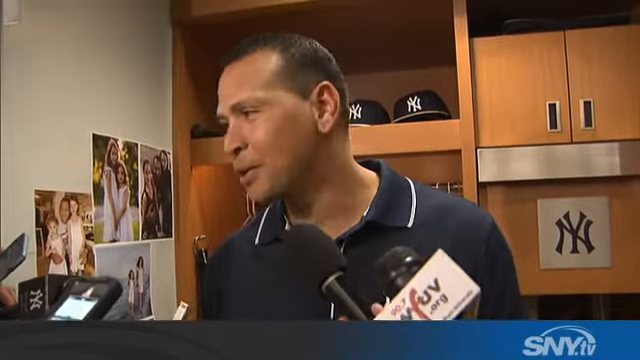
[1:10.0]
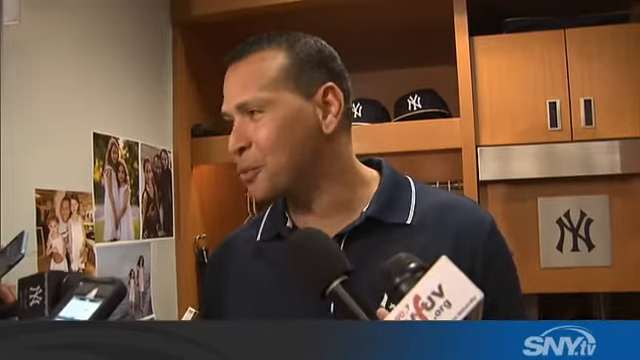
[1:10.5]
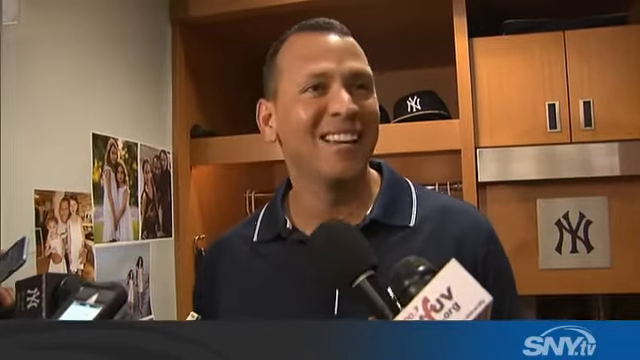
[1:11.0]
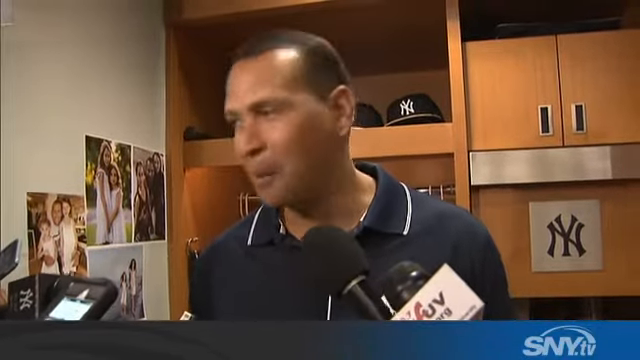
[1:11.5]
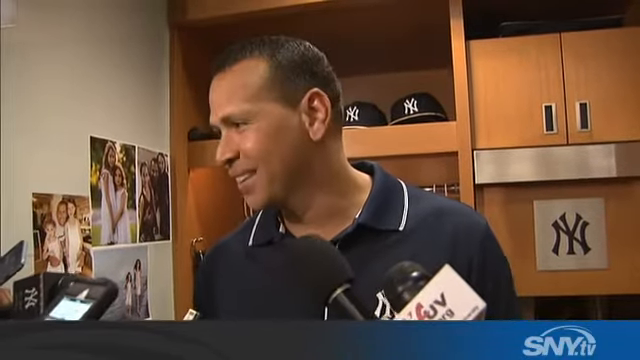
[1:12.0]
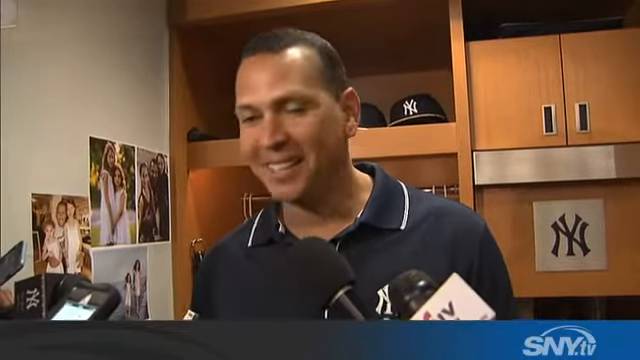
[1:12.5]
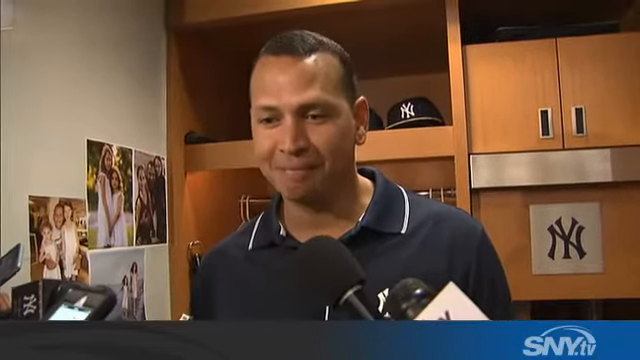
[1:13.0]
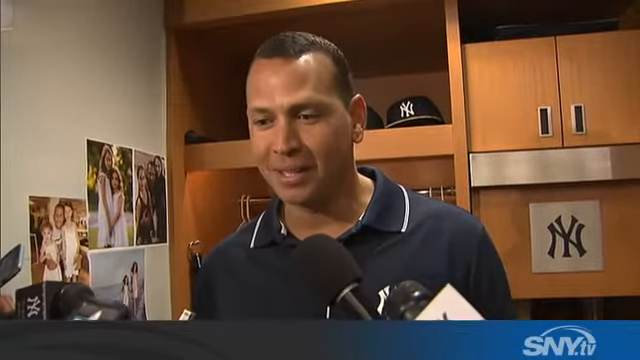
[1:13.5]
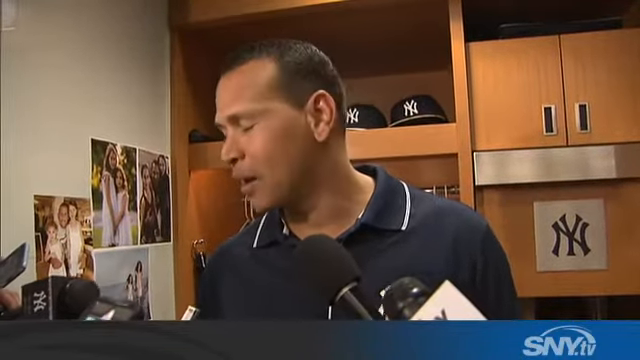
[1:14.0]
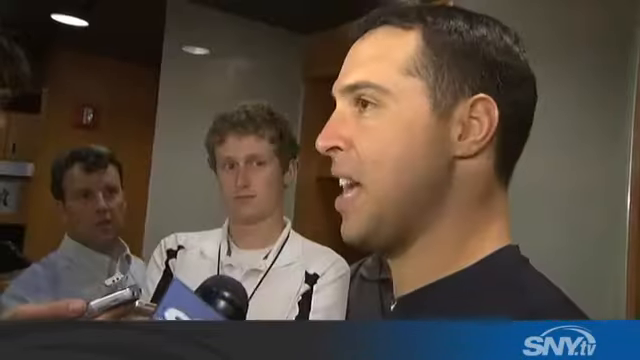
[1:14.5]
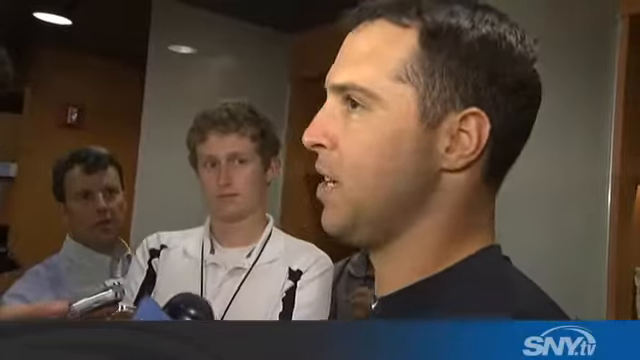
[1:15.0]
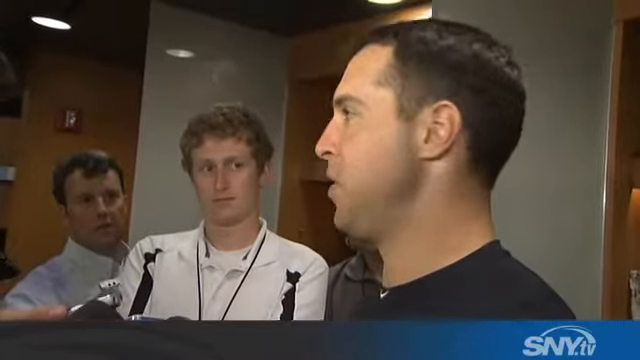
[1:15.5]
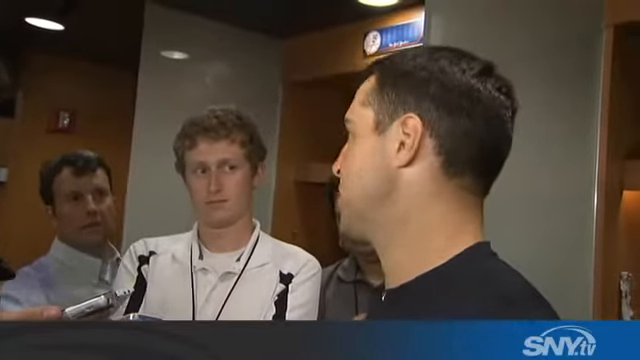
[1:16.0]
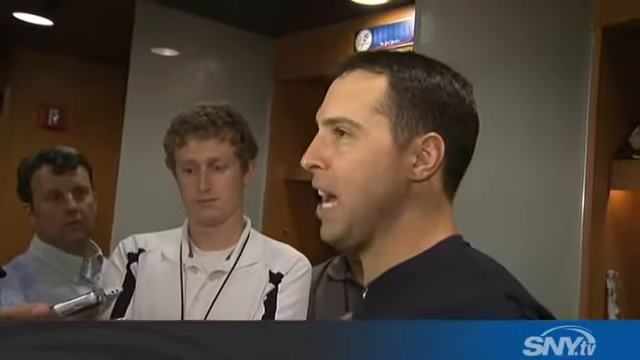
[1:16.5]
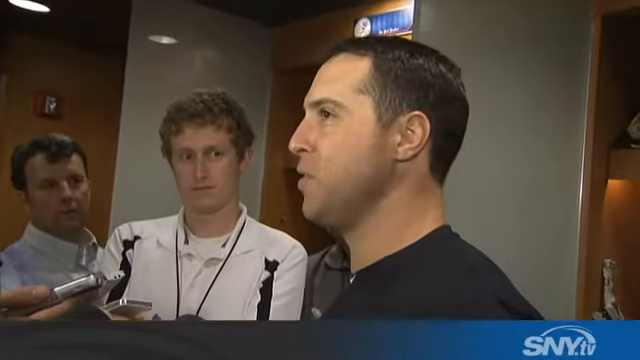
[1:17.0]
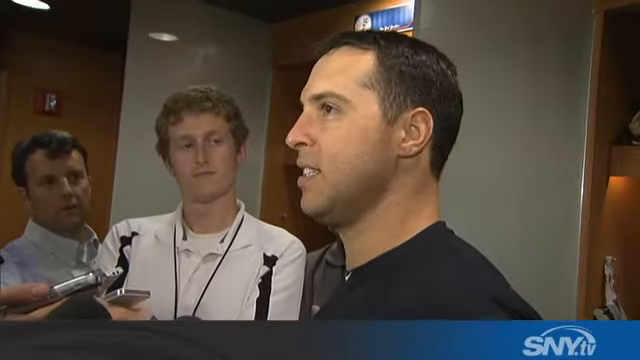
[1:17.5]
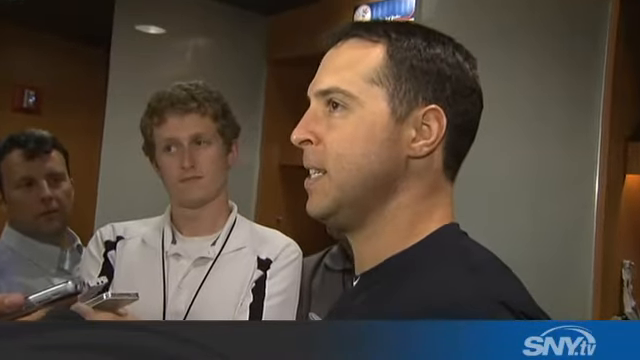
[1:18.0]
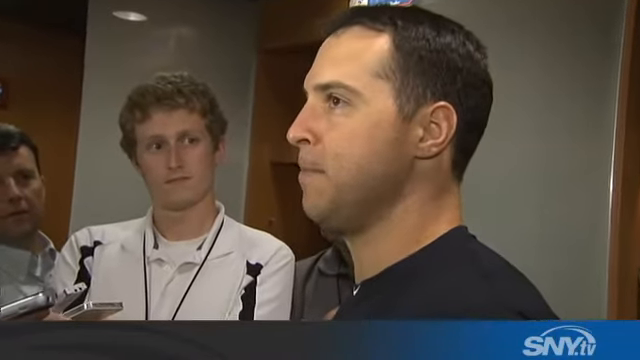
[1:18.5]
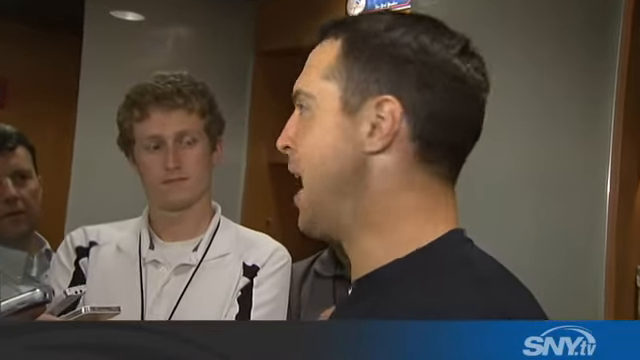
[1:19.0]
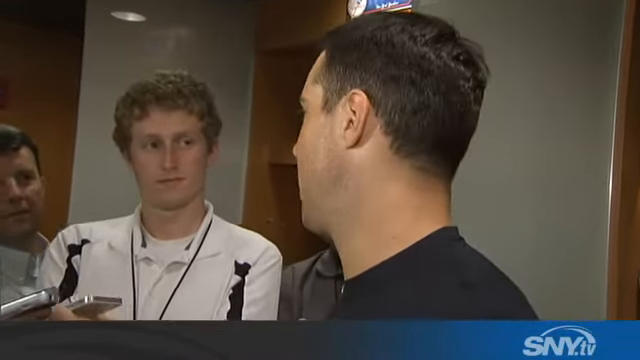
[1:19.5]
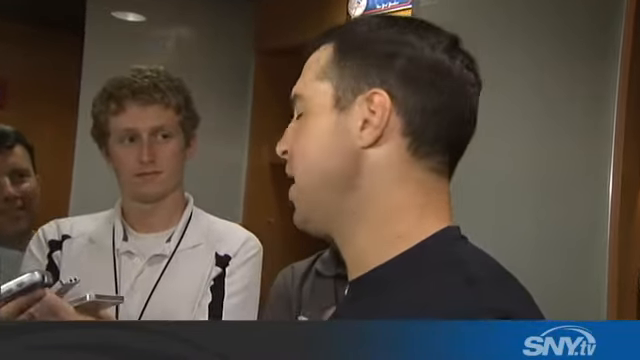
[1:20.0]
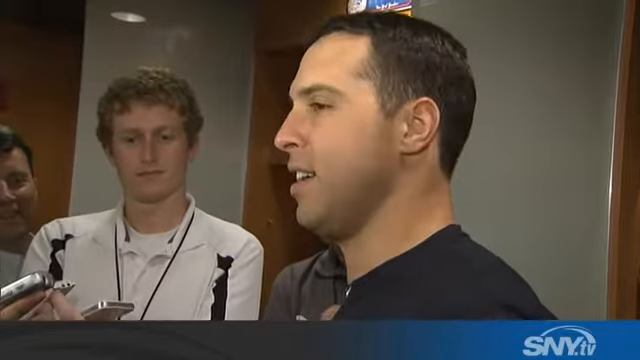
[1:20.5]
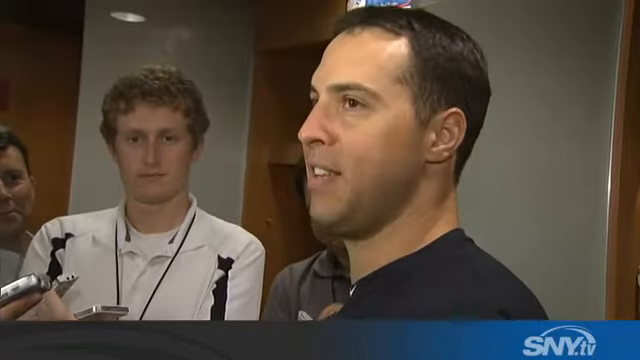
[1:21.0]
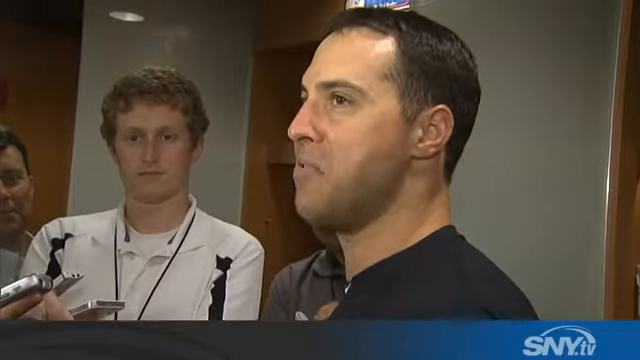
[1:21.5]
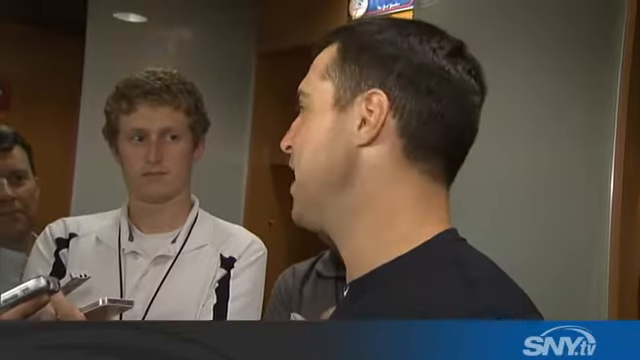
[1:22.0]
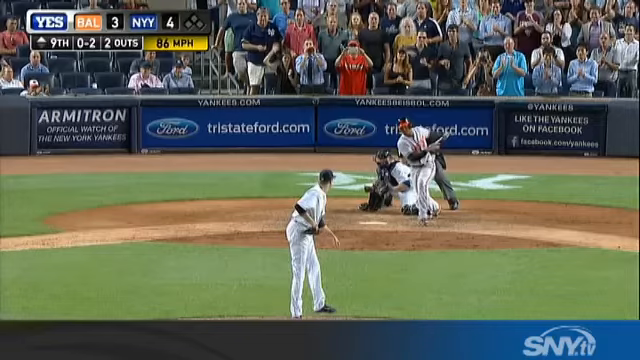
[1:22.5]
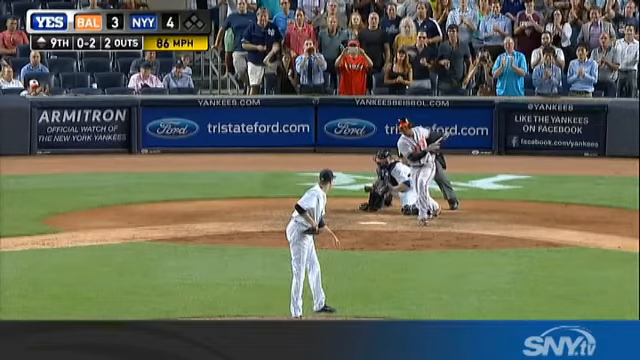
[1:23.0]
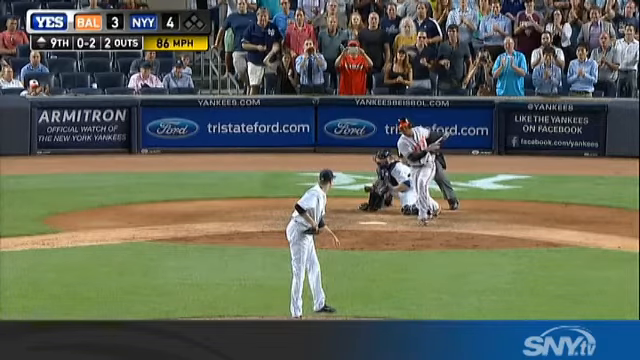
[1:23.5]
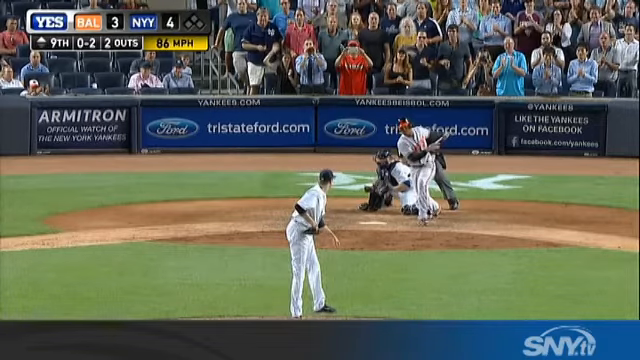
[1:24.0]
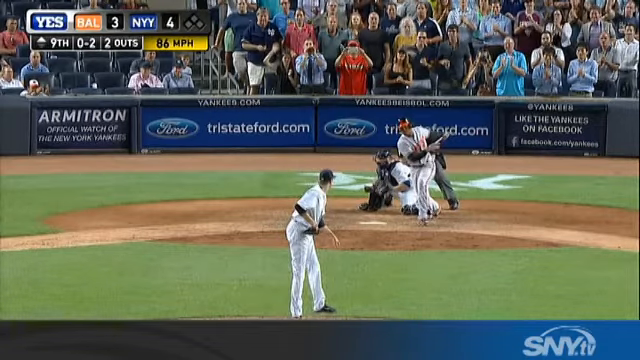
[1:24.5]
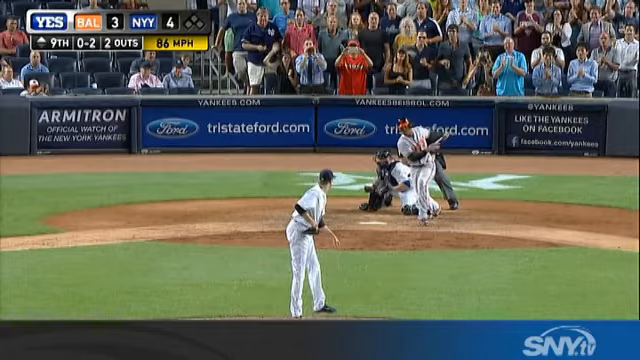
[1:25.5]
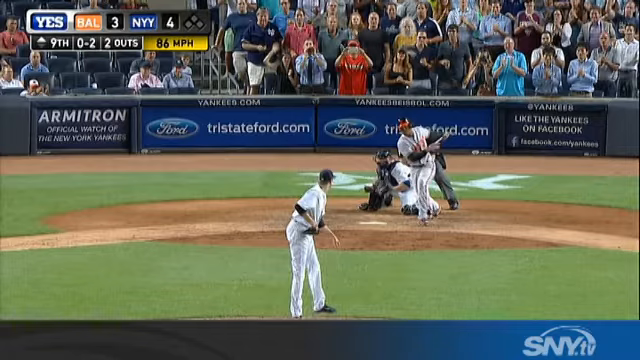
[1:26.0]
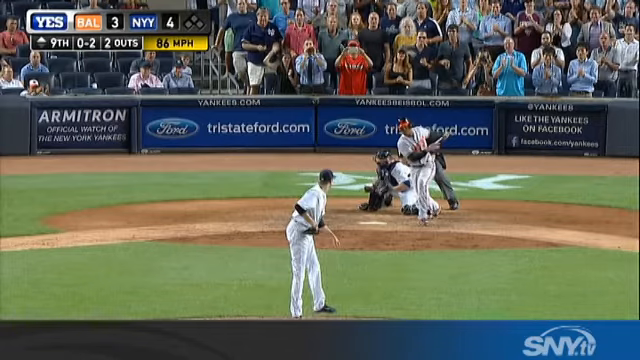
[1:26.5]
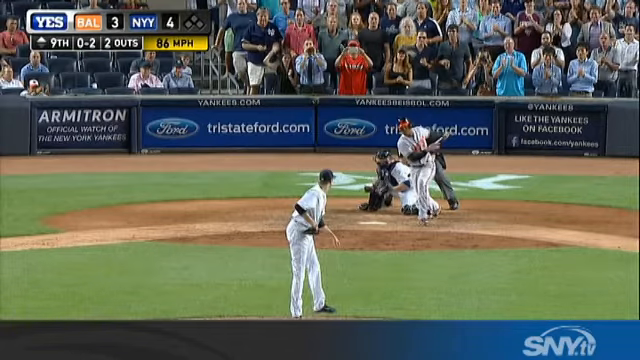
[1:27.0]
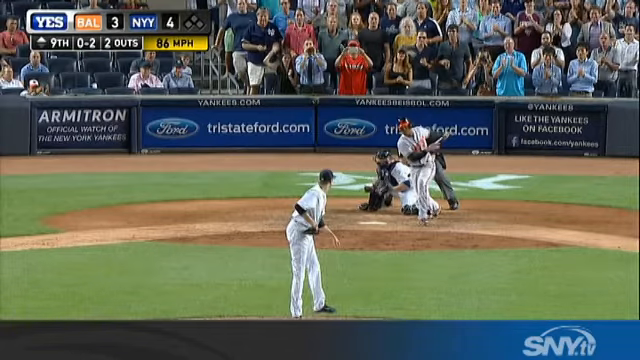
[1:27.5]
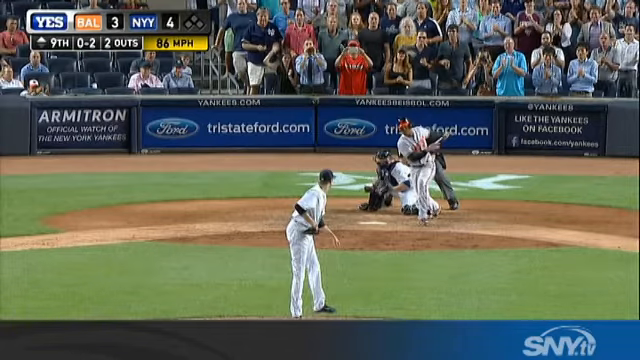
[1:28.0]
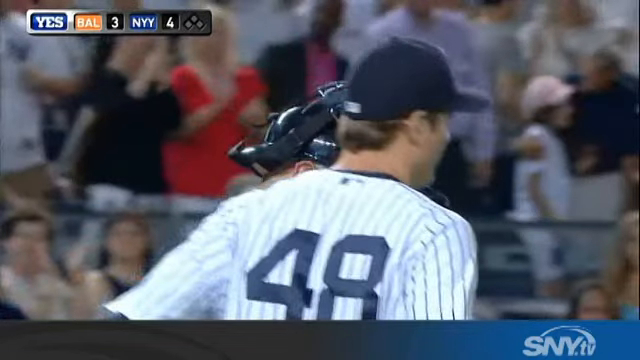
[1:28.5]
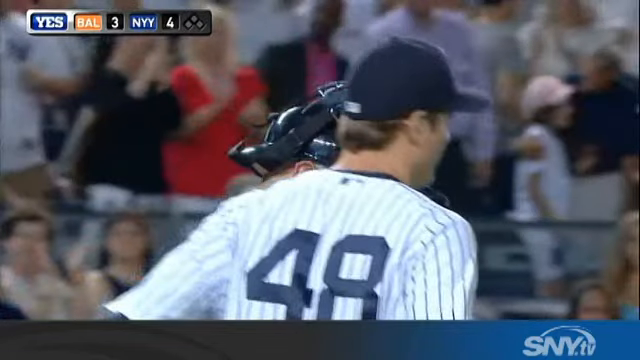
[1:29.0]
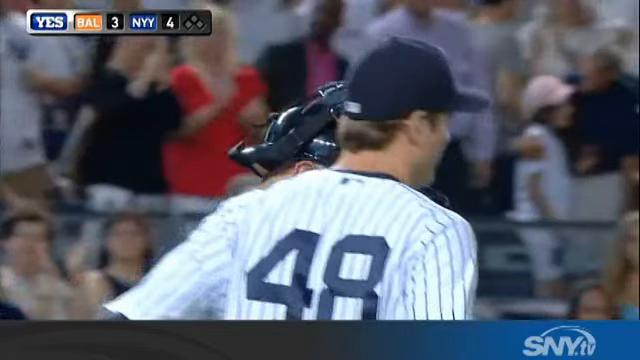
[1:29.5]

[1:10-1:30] Alex Rodriguez is being interviewed, now looking toward the left side of the screen. Two baseball caps are behind him on his work area. He talks and smiles, with microphones near his face, and apparently a reporter asks him a question. The video then returns to Mark, whose last name begins with T, who is talking and turns toward his right side every now and then. Then pictures appear of Yankees players playing on the field. The wall says Yankees, like the Yankees on Facebook, and the number 48 is shown.